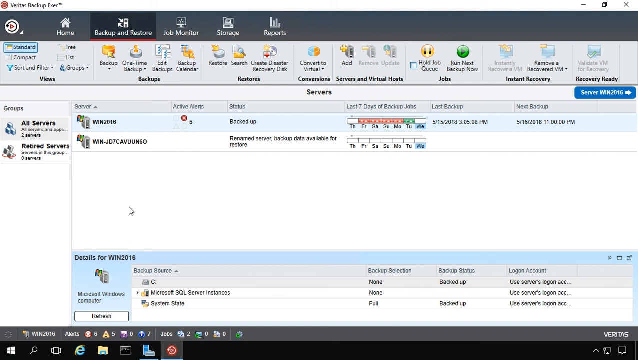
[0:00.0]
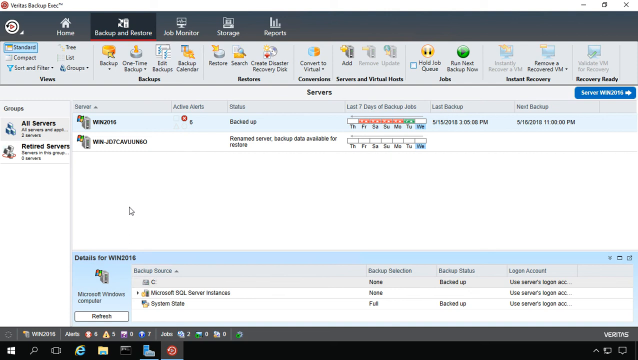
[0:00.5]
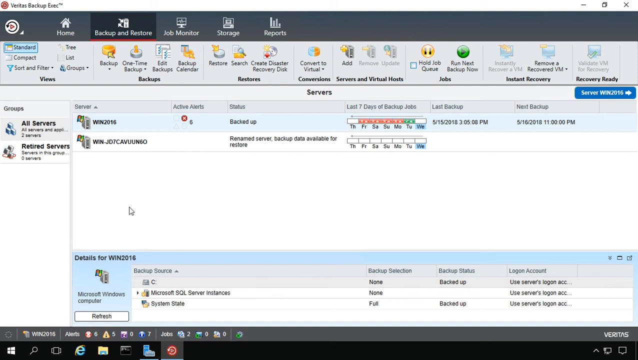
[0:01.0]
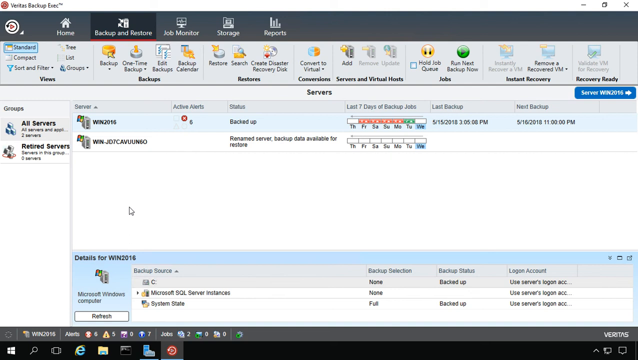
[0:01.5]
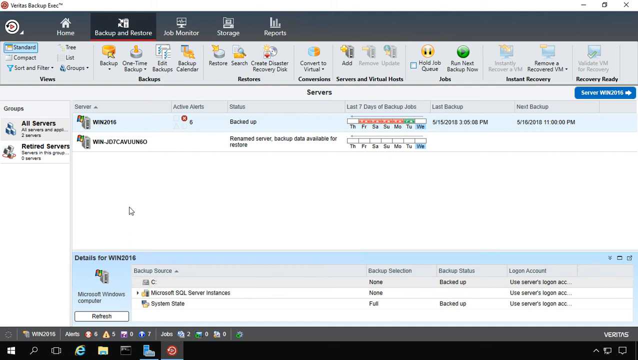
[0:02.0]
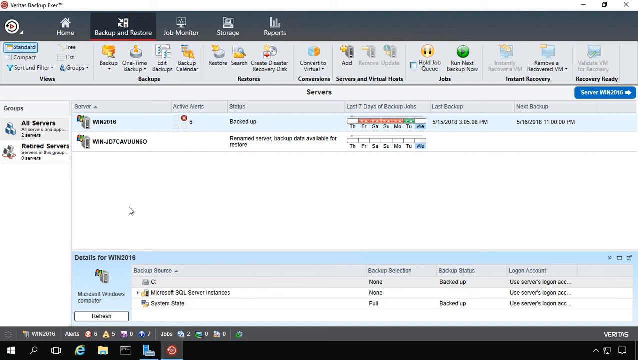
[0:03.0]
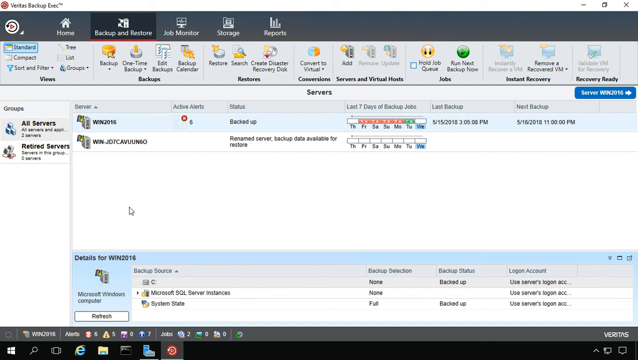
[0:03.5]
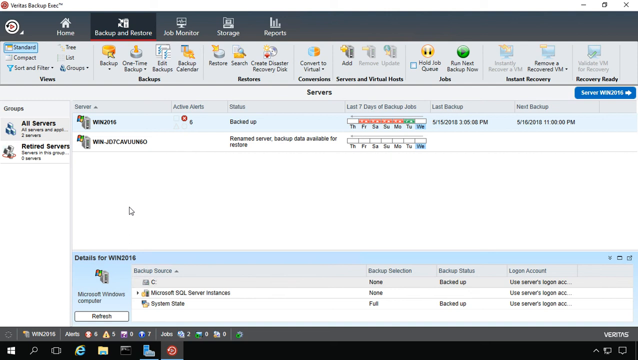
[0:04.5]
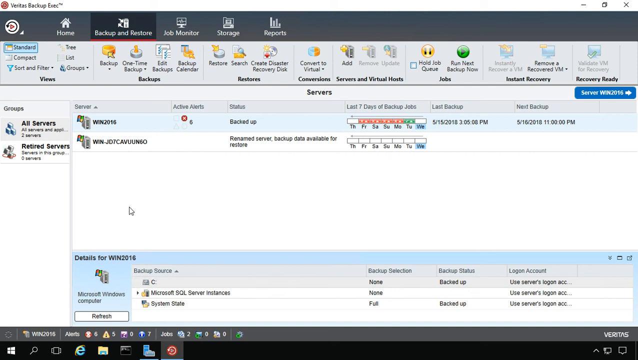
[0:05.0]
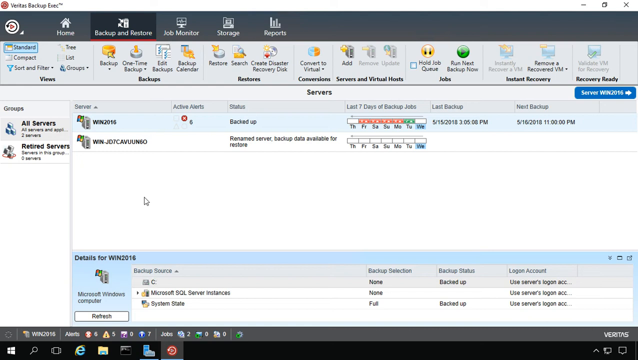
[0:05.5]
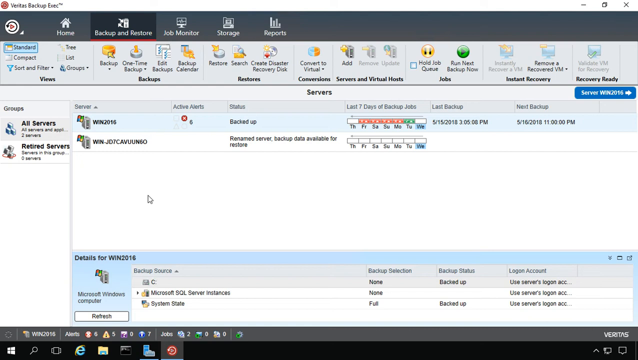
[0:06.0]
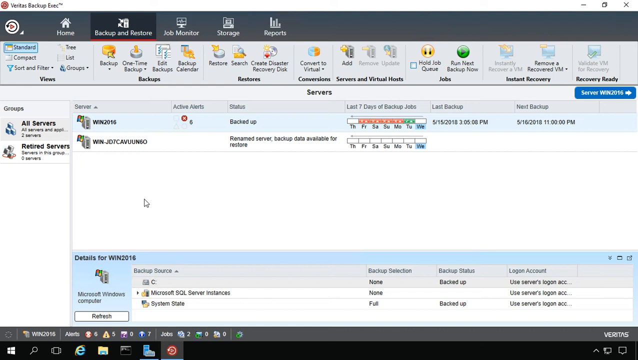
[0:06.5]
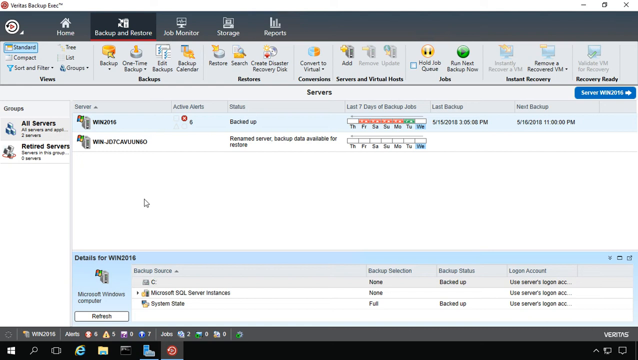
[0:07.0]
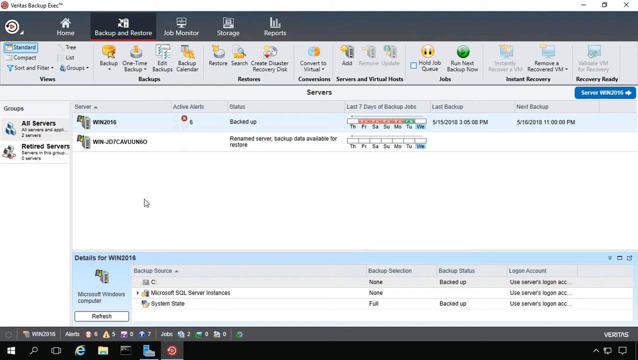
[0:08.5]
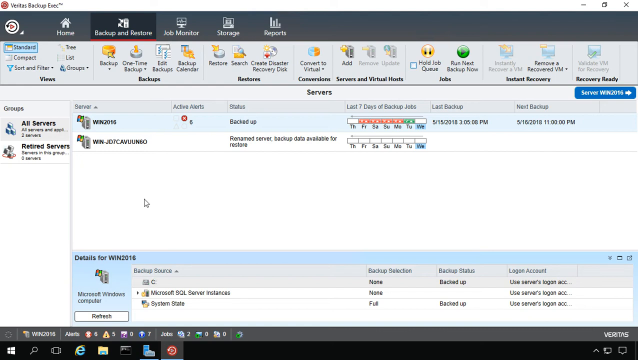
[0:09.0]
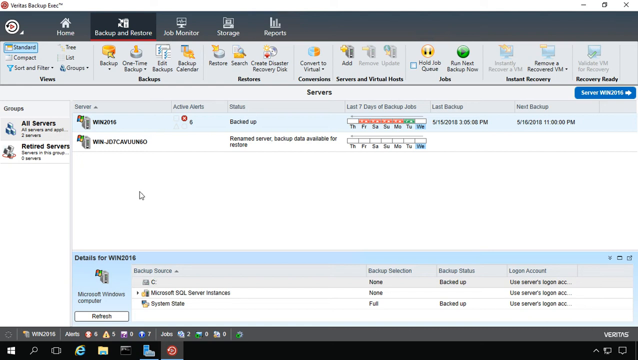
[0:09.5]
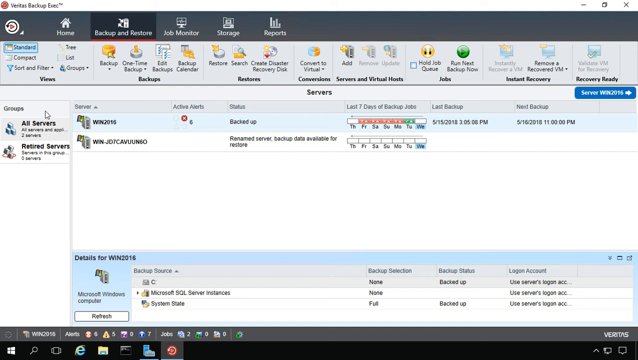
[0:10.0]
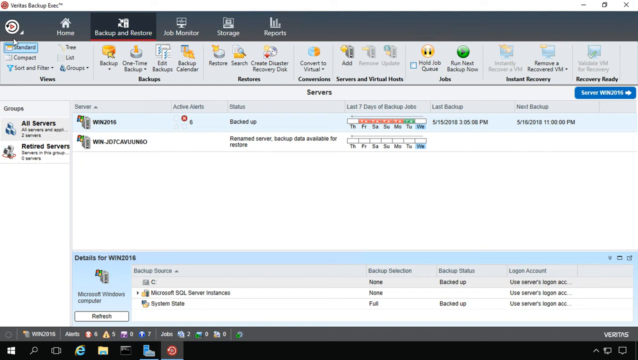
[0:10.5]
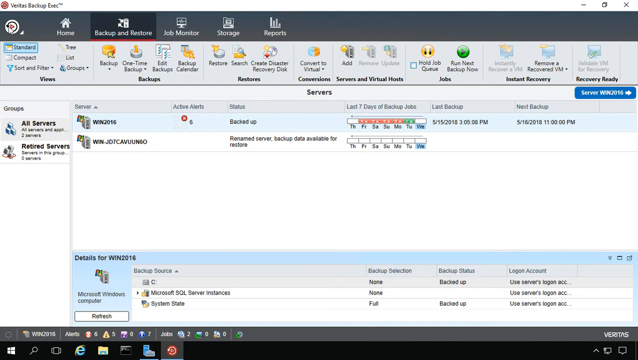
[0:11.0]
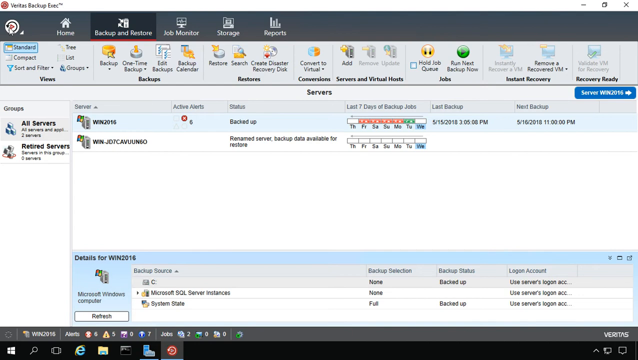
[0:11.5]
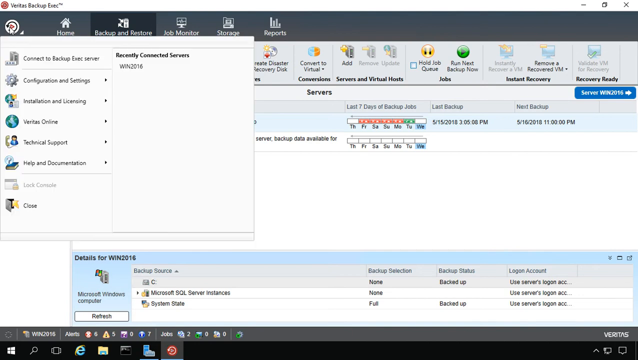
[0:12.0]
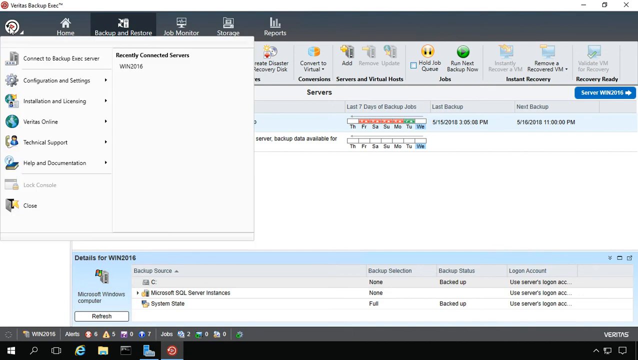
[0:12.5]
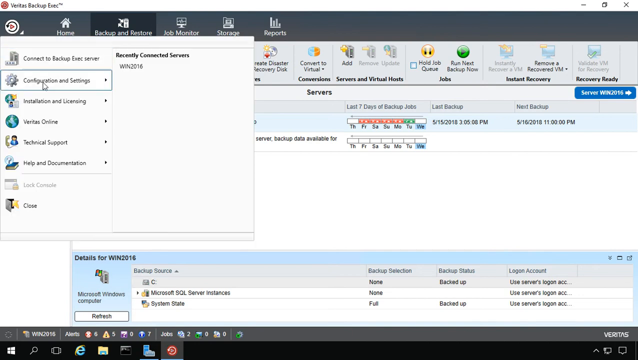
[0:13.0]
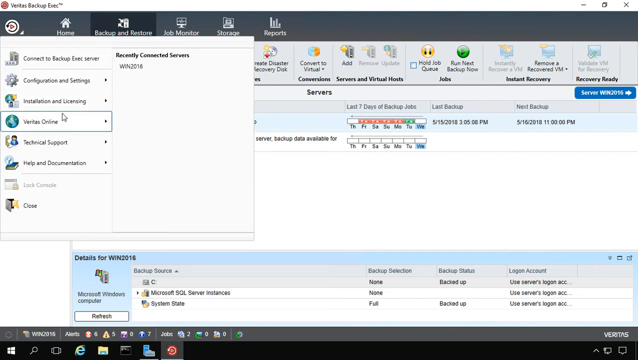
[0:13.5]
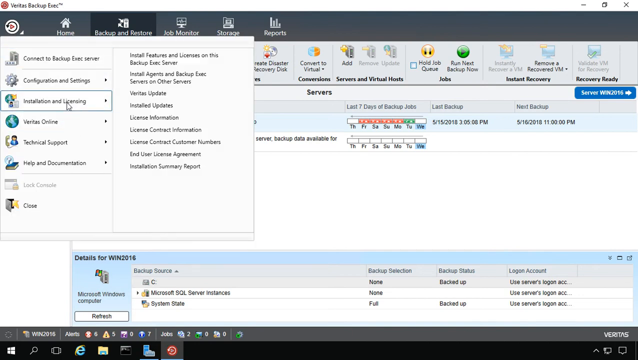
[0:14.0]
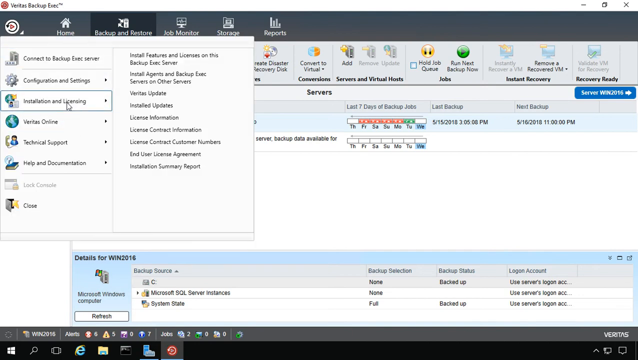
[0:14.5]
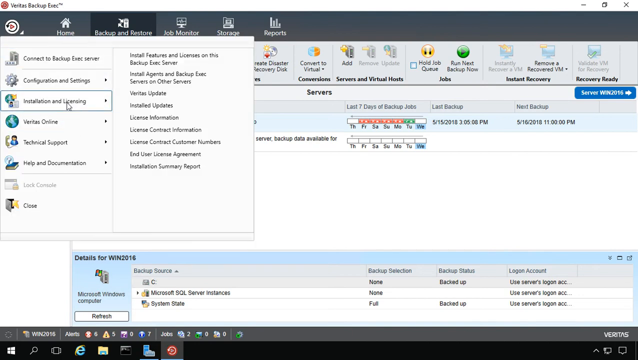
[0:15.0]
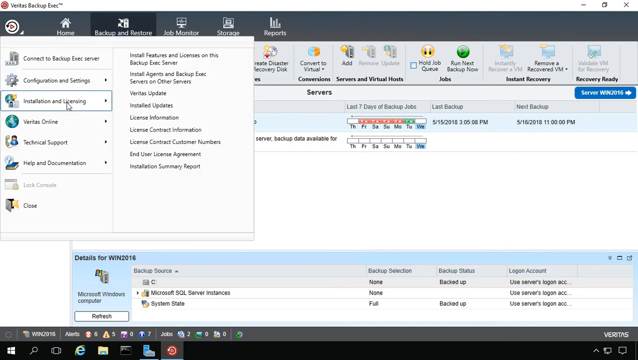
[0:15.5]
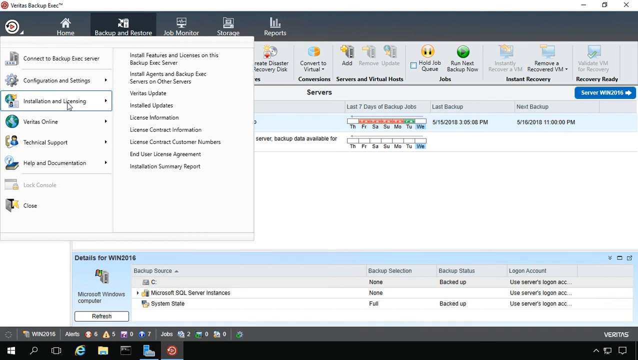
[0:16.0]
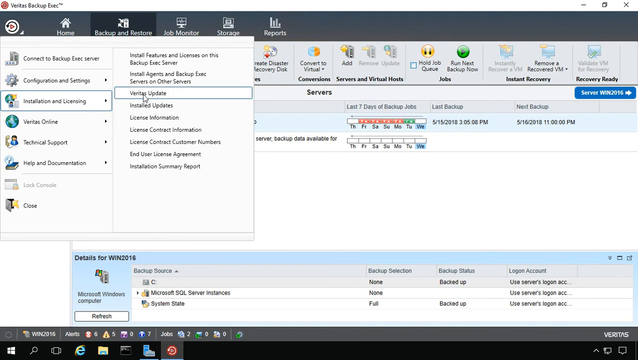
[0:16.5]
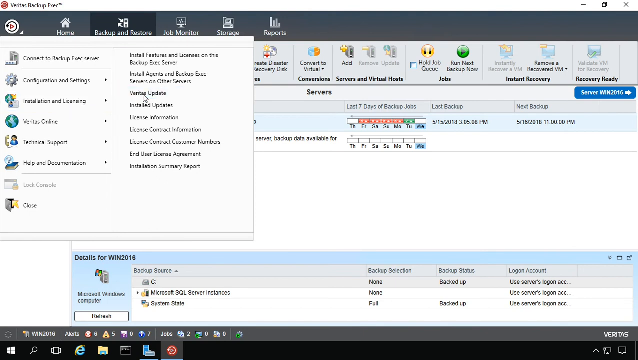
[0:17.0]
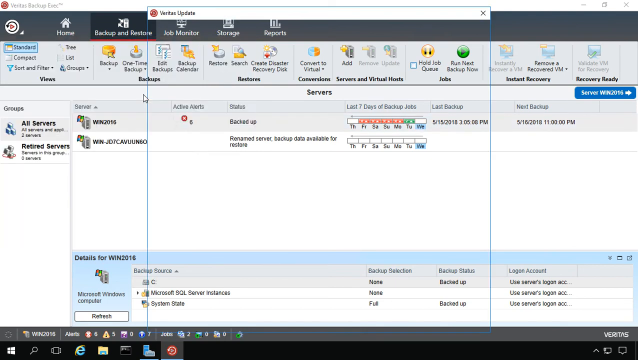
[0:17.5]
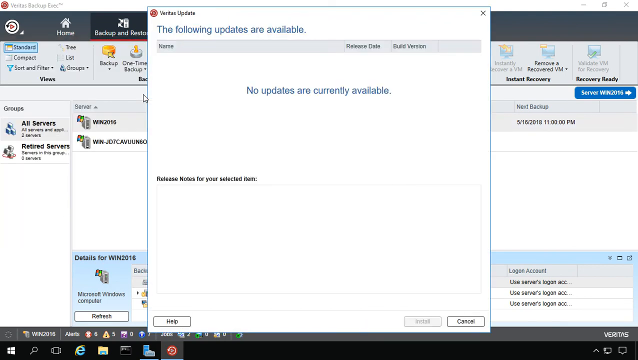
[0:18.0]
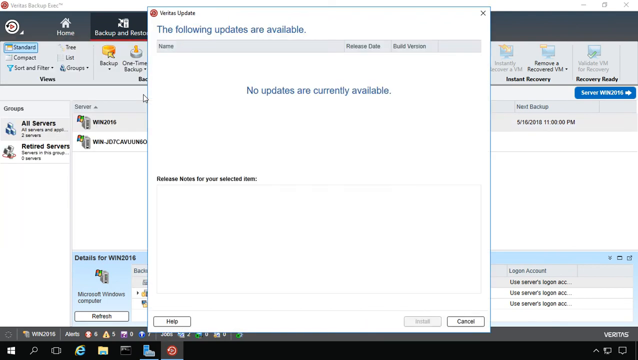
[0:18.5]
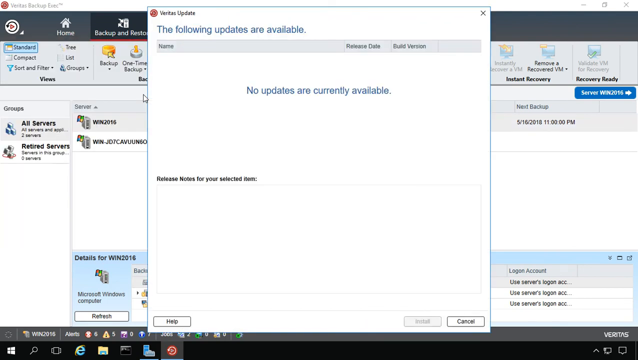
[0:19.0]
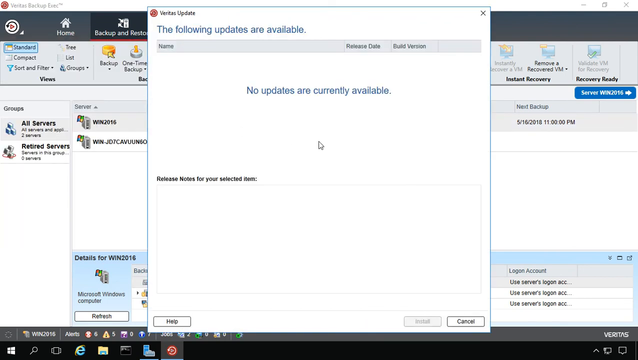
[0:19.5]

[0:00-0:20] A Windows screen shows a window titled Veritas Backup Exec at the top. Options for reports, job monitor, storage, backup and restore are visible, along with a Home button. The choices for making, editing and copying a backup are displayed. The servers are listed on the left side, and other icons are at the bottom of the screen. On the right side, another server appears in blue letters for viewing details about the one that is chosen, and there is an alerts icon. The interface shows the days on which backups happened and when the last backup was made. The user shows how to create a backup, how to install, and how to use the licenses.